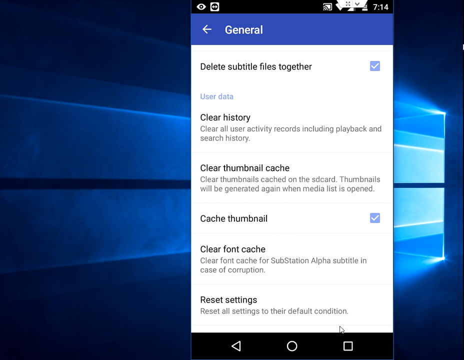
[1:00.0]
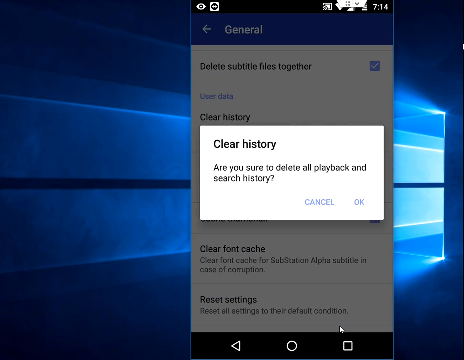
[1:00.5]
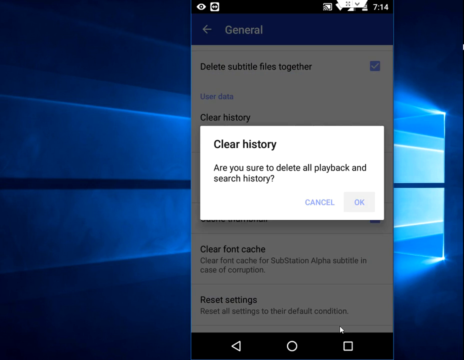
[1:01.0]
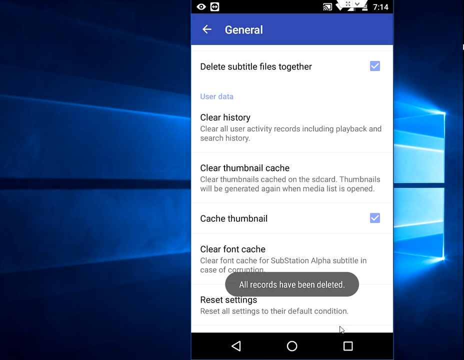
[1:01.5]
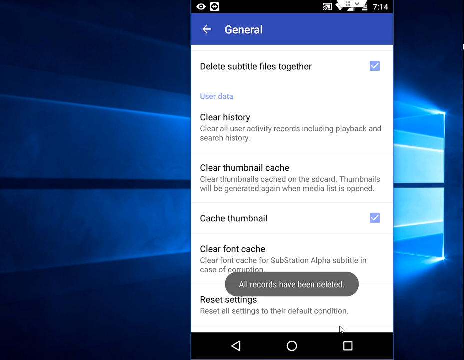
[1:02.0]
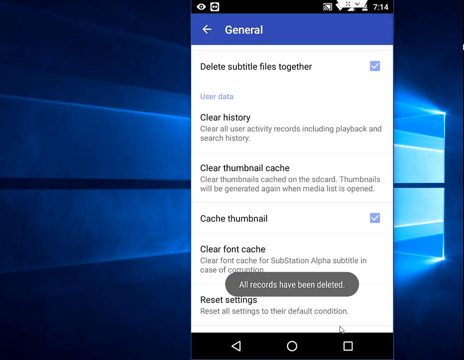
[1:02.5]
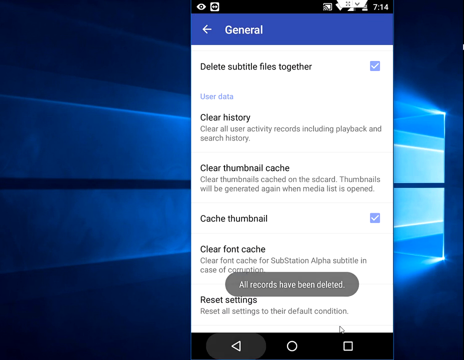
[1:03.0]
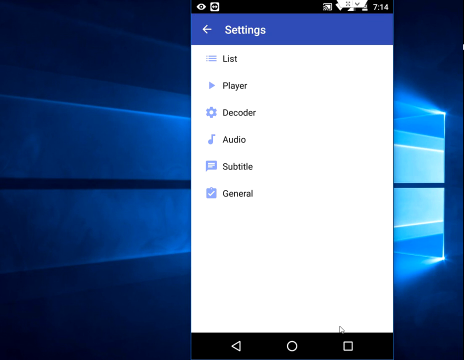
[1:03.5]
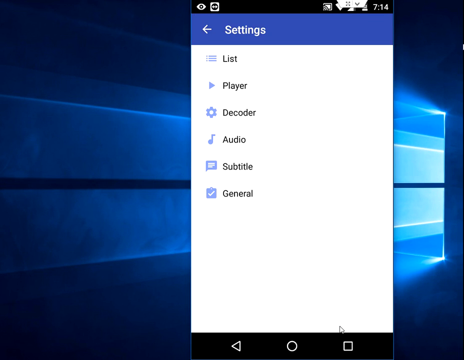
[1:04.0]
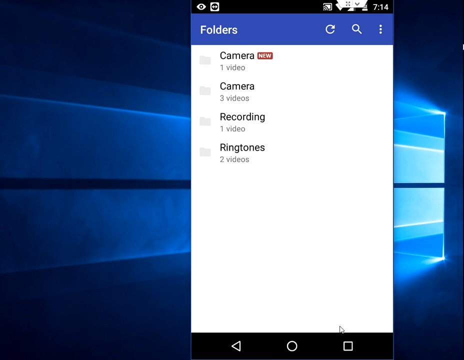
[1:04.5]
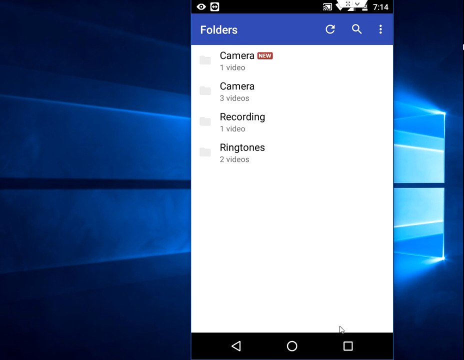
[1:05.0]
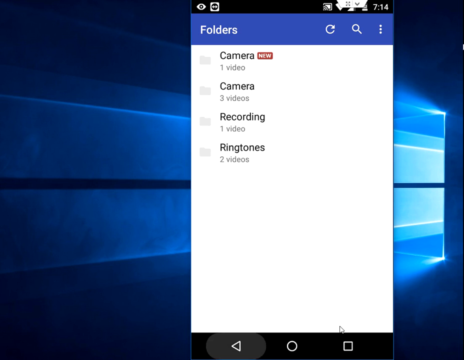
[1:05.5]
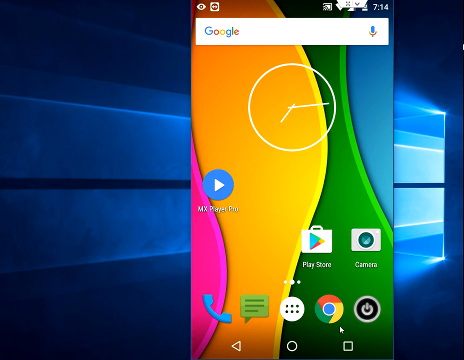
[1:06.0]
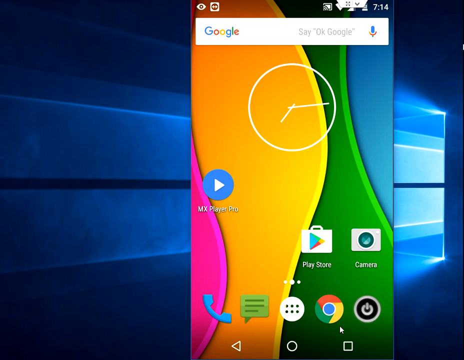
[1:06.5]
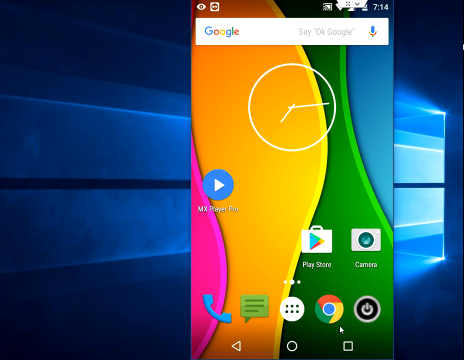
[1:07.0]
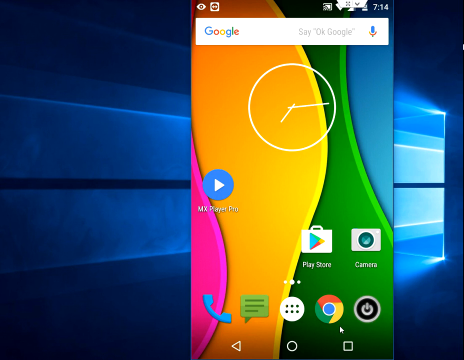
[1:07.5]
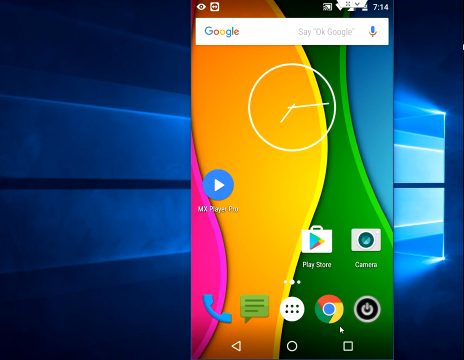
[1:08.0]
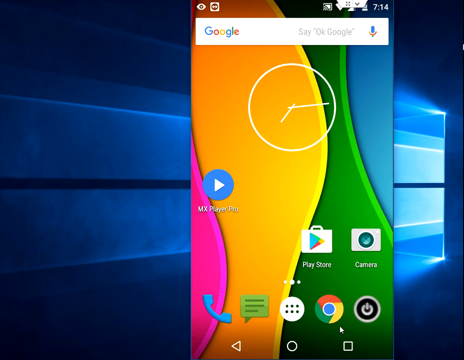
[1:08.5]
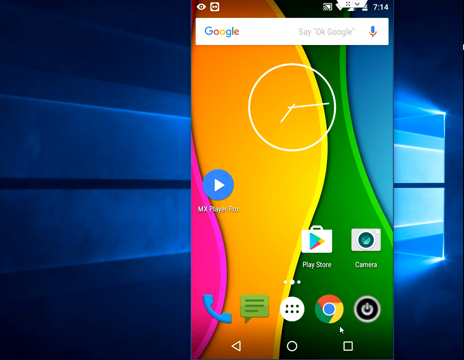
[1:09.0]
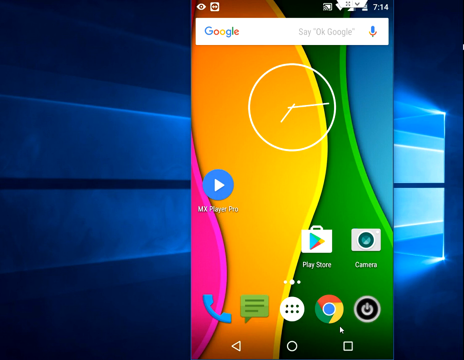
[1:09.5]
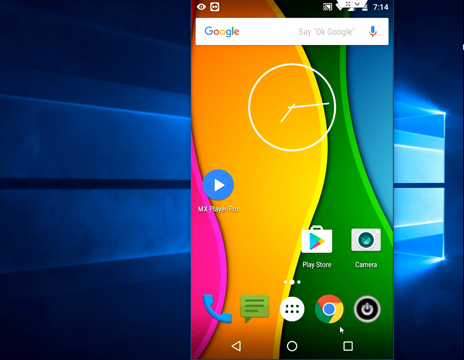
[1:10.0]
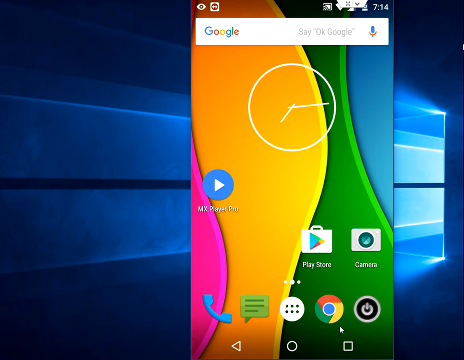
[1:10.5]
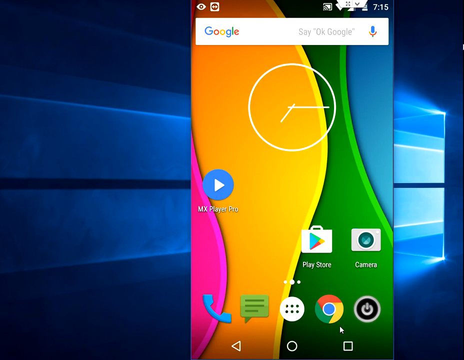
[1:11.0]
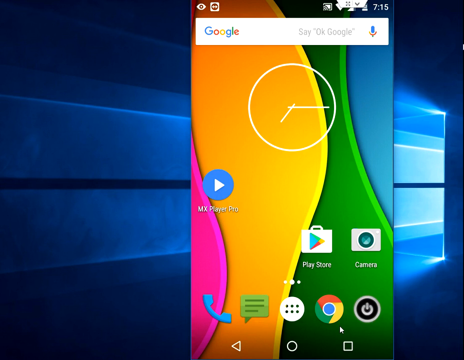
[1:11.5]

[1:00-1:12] The settings are still shown, and it looks like the thumbnails have been deleted. The General settings menu is shown again, with "Delete subtitles, files together" checked. Below that is "Clear history," described as "clear all user activity records, including playback and search history." Next is "Clear thumbnail cache," with "clear thumbnails cached on the SD card. Thumbnails will be generated again when the media list is opened." "Cache thumbnail" is checked. Then comes "Clear font cache," with "clear font cache for Substation Alpha subtitle in case of corruption." At the bottom is an option for "Reset settings" that says "Reset all settings to their default condition."